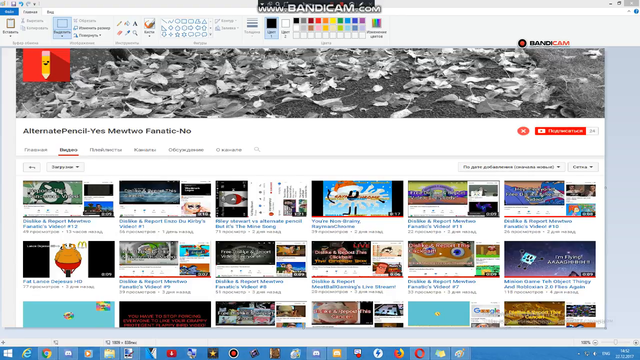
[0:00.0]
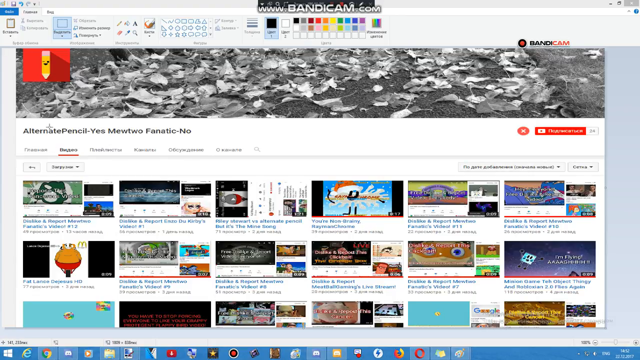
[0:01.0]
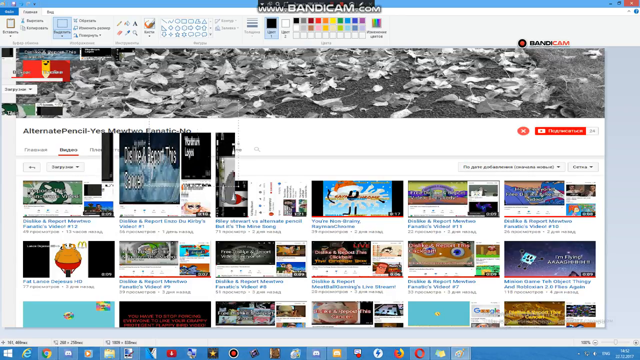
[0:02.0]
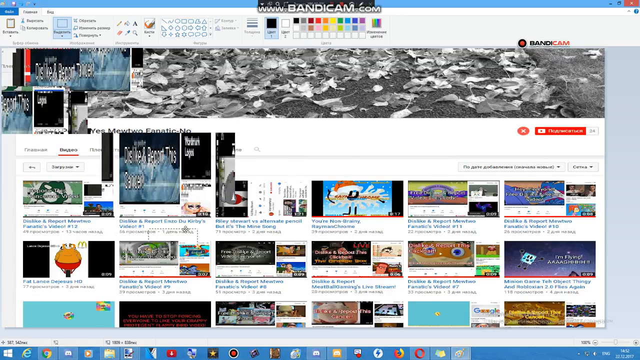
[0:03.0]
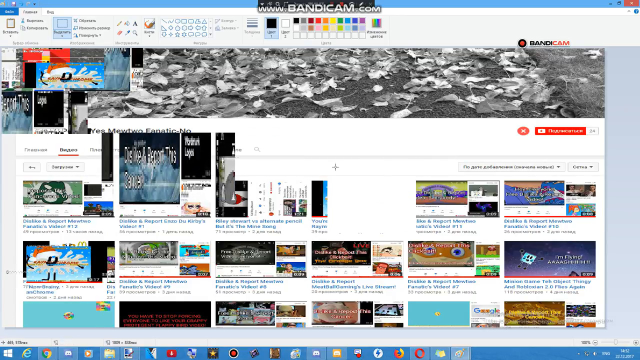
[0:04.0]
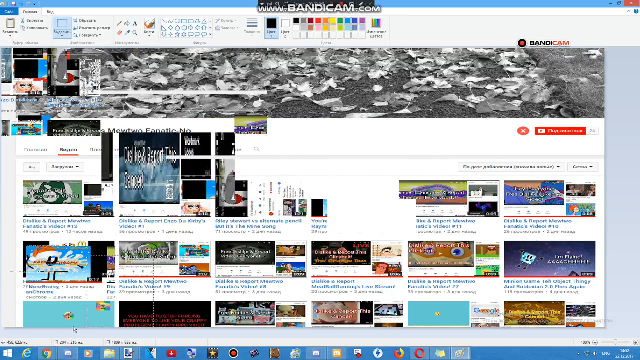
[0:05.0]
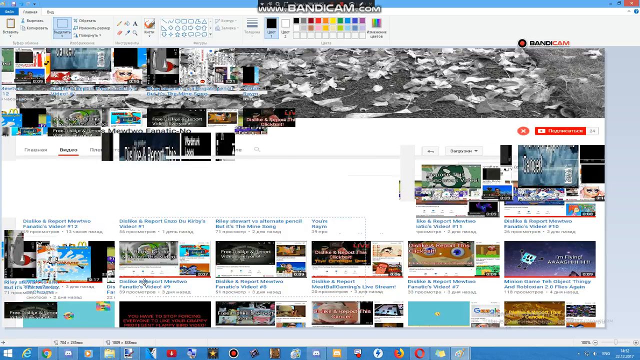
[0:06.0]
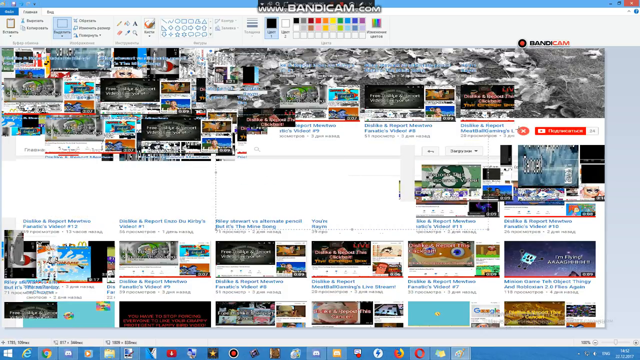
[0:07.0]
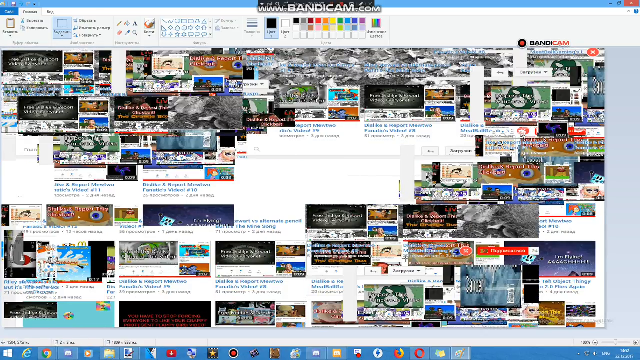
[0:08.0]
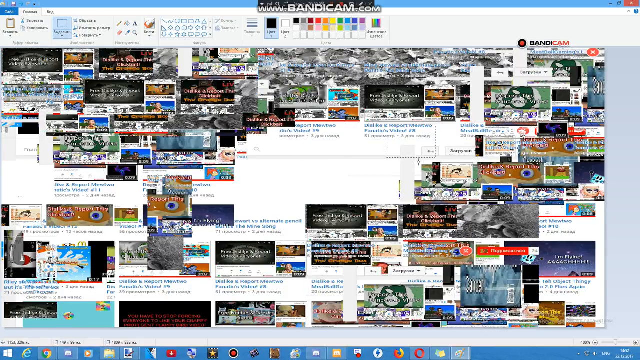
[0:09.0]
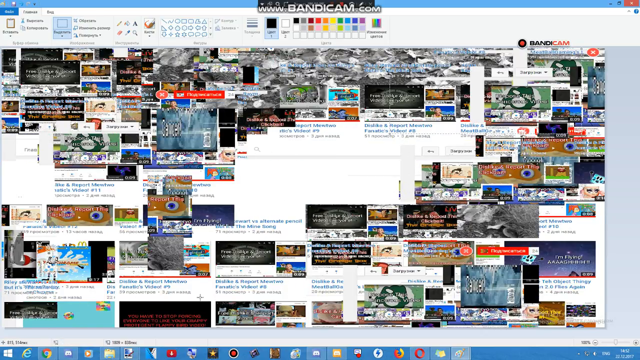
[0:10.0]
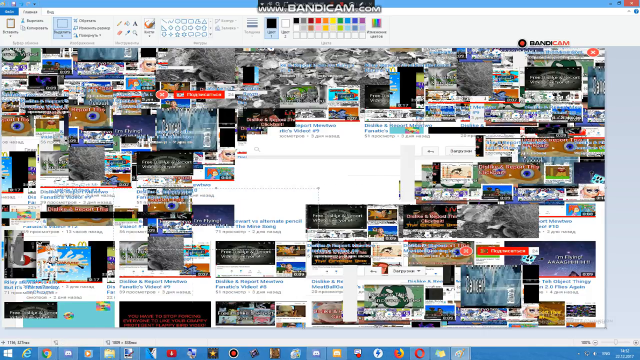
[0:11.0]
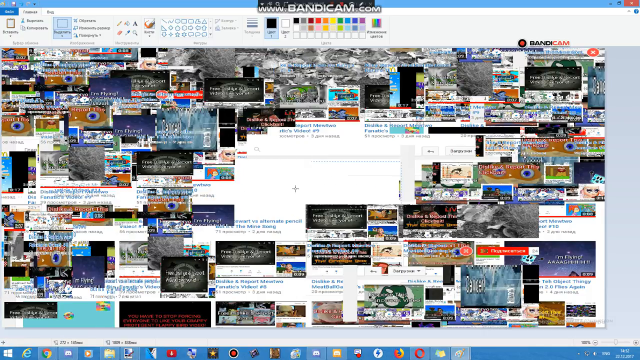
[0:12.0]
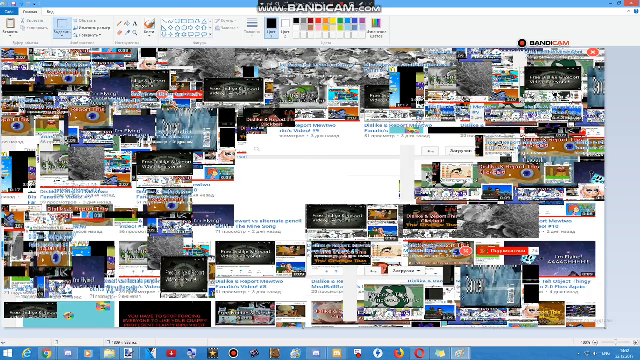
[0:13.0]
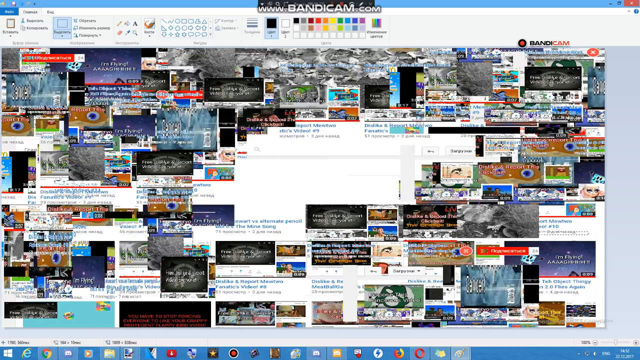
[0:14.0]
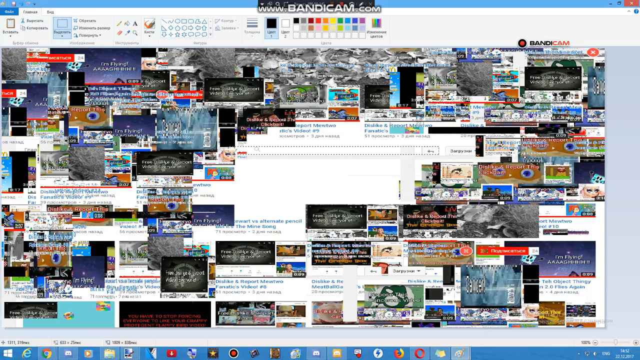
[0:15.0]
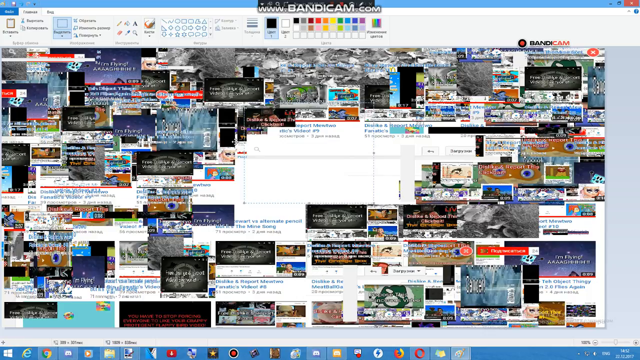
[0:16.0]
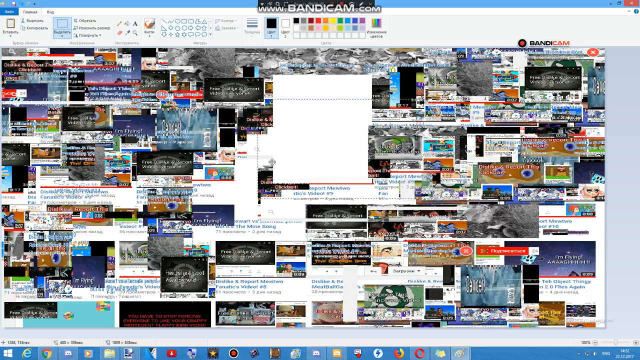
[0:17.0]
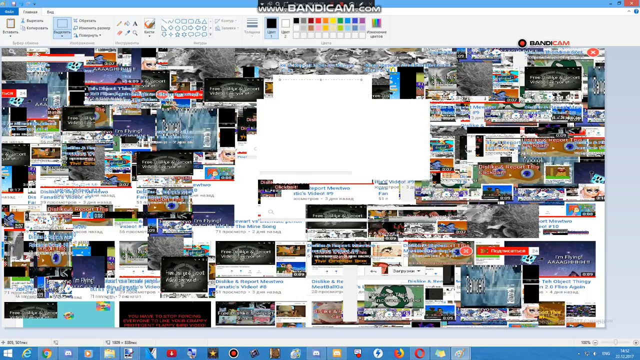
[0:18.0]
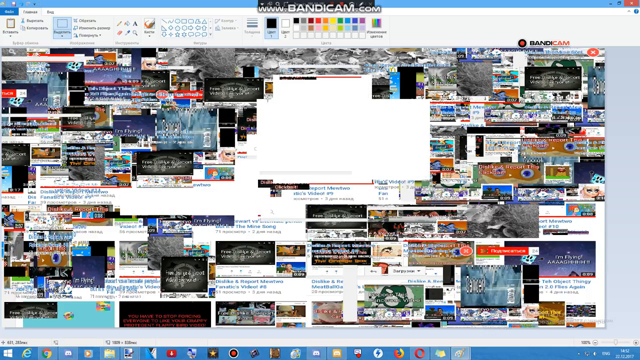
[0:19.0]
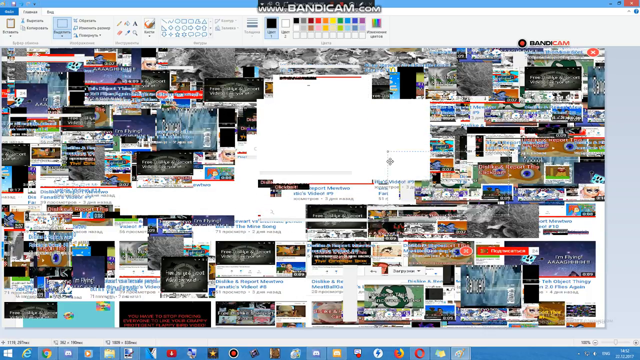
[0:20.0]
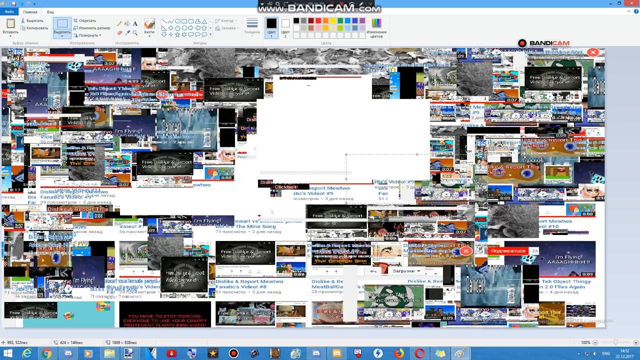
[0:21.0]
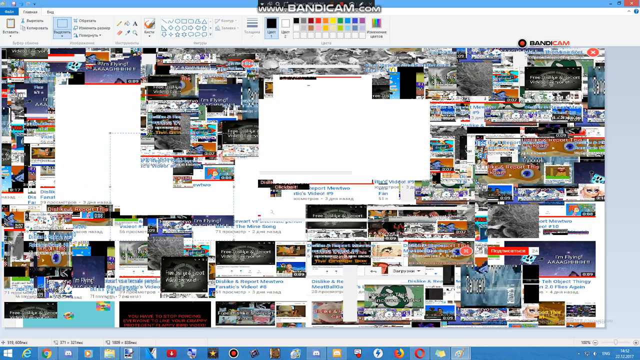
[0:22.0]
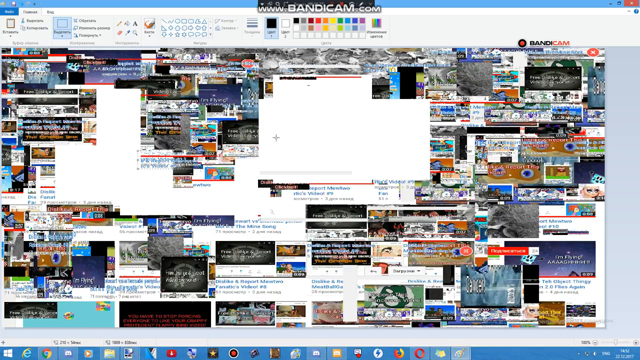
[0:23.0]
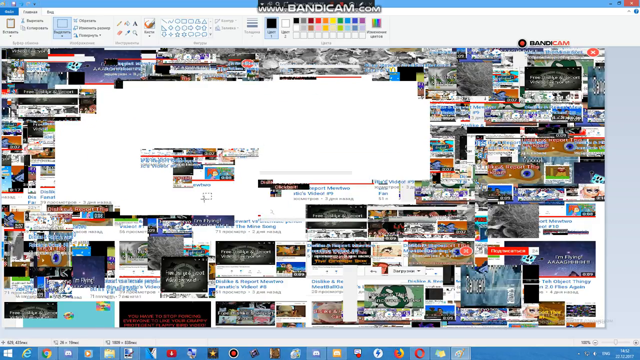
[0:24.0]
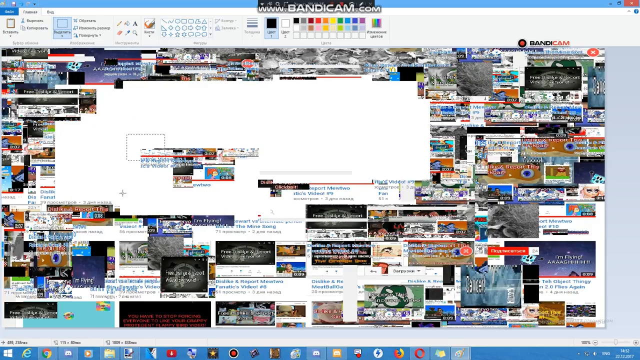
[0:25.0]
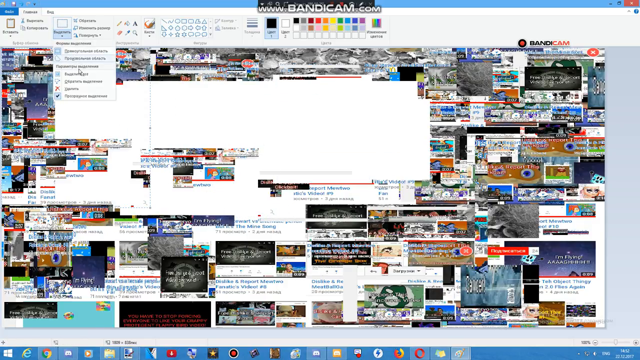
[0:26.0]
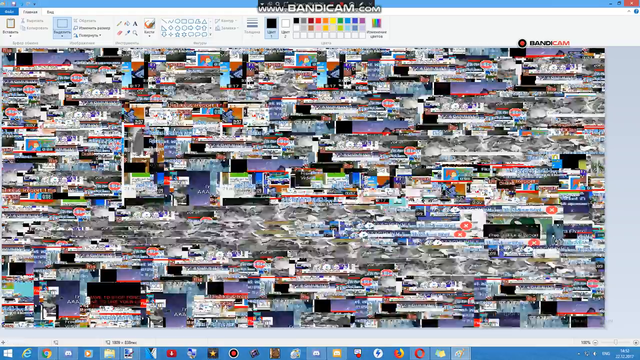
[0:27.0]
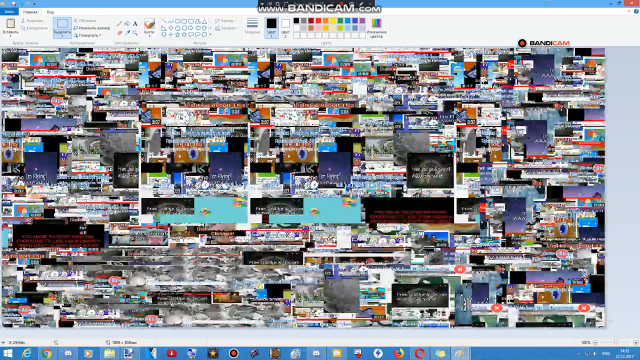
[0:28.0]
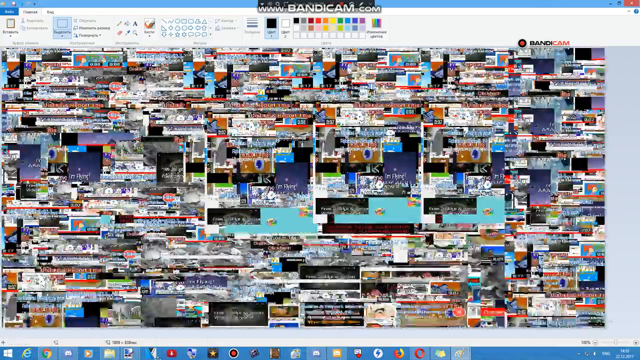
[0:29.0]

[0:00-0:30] The software appears to be Paint, specifically regular Paint rather than Paint 3D, and someone seems to be creating some sort of artwork for their YouTube channel. "bandicam.com" is visible. There are a ton of videos at the start, and some of them appear to be copy-pasted duplicates. A YouTube mark on the icon suggests it is a YouTube channel, whose name is Alternate Pencil. The homepage videos and photos are copy-pasted nonstop, over and over, and eventually the entire screen apparently gets copy-pasted until it goes completely out of hand. It looks like a collage for a thumbnail is being made from the same repeated edit.